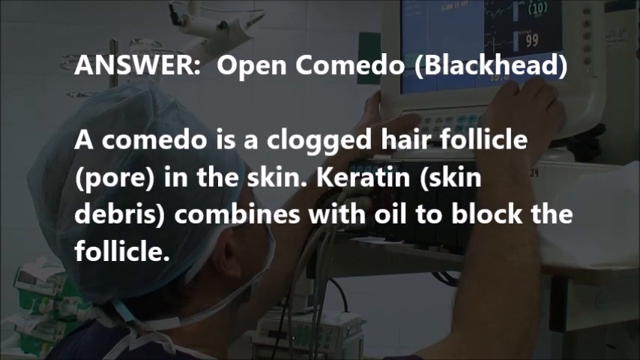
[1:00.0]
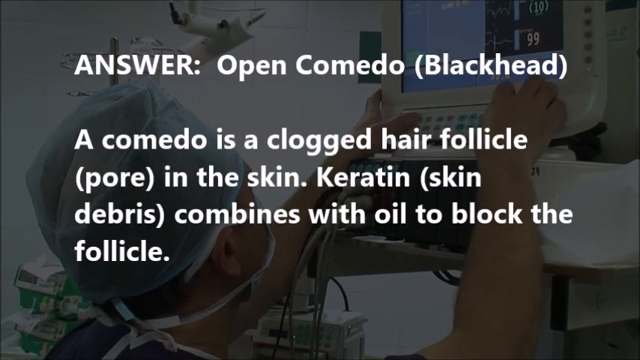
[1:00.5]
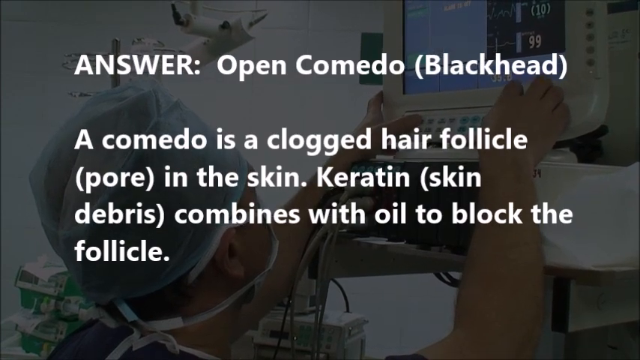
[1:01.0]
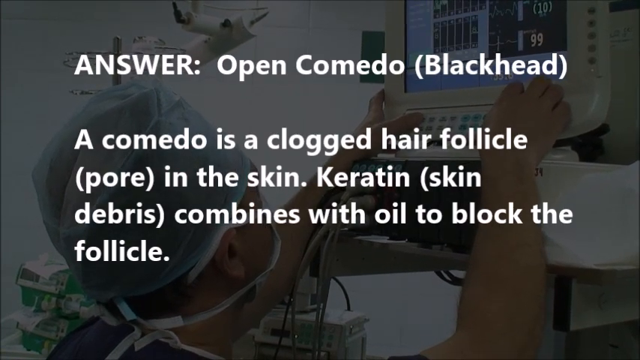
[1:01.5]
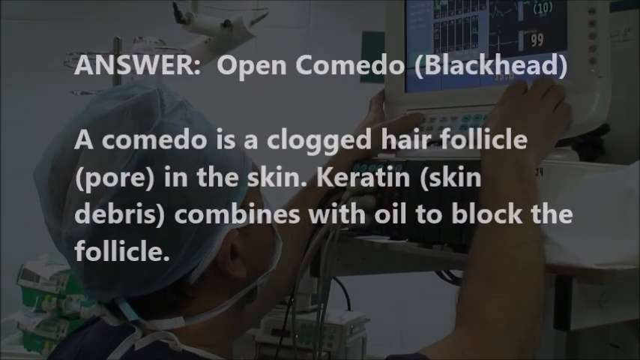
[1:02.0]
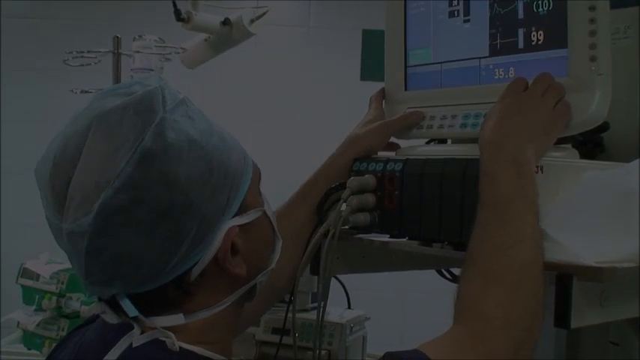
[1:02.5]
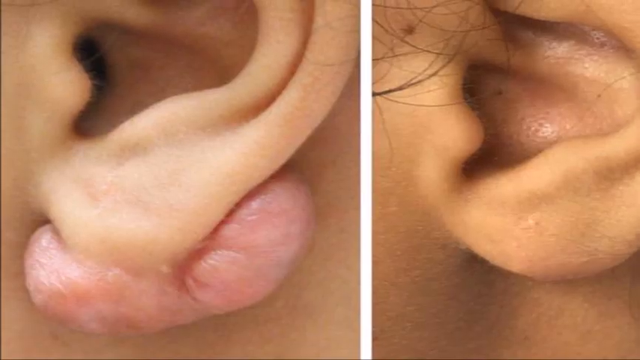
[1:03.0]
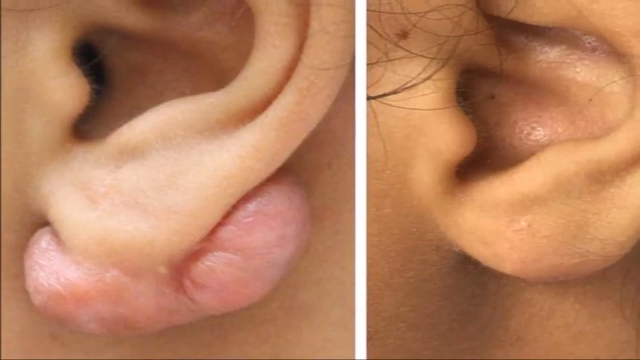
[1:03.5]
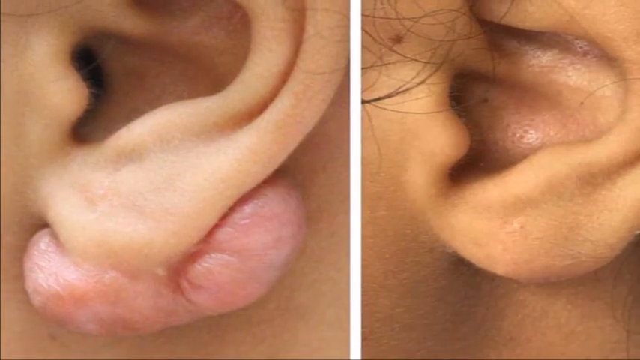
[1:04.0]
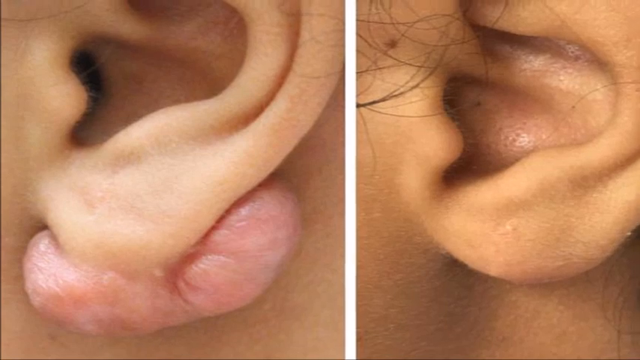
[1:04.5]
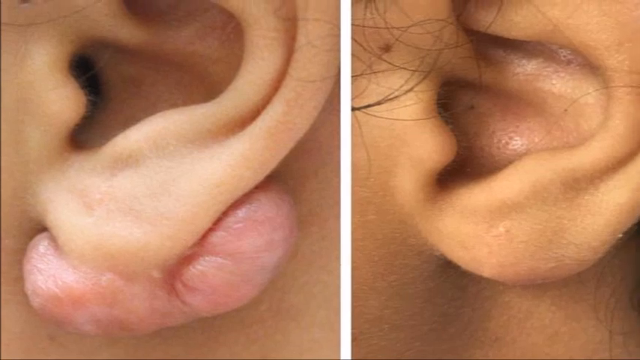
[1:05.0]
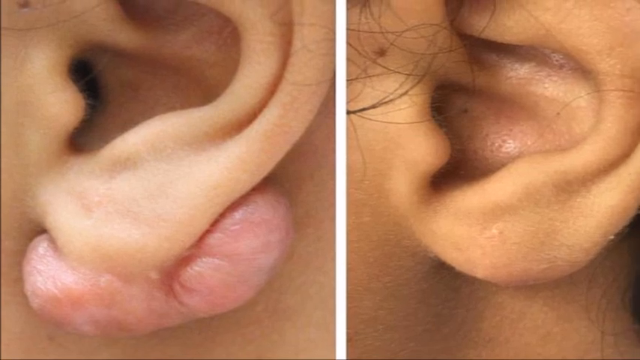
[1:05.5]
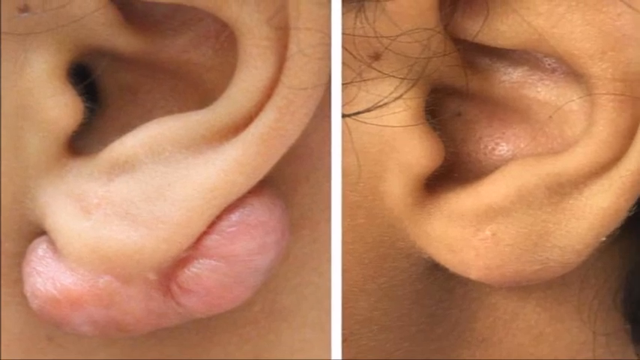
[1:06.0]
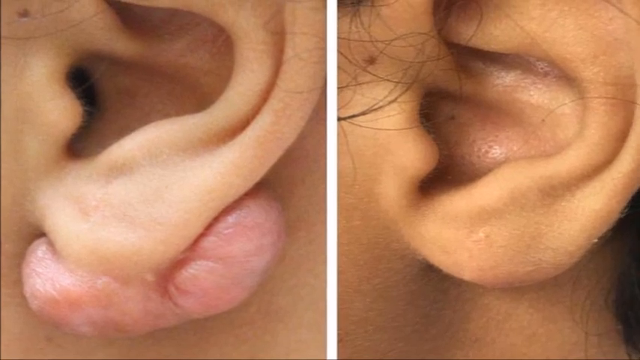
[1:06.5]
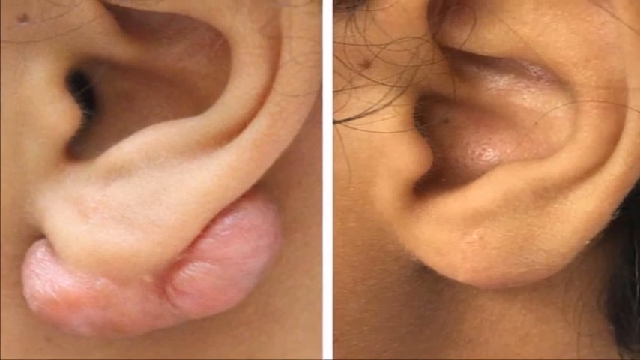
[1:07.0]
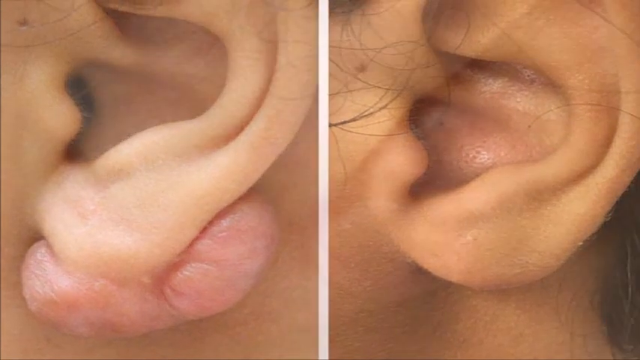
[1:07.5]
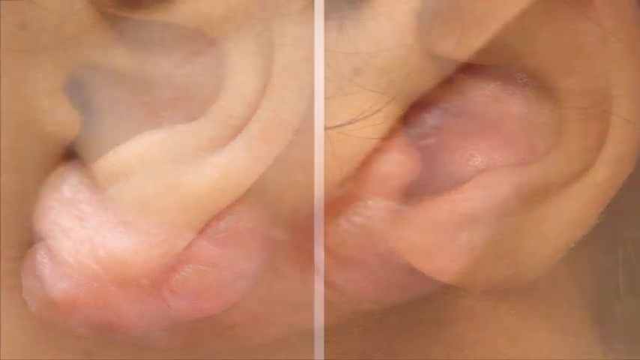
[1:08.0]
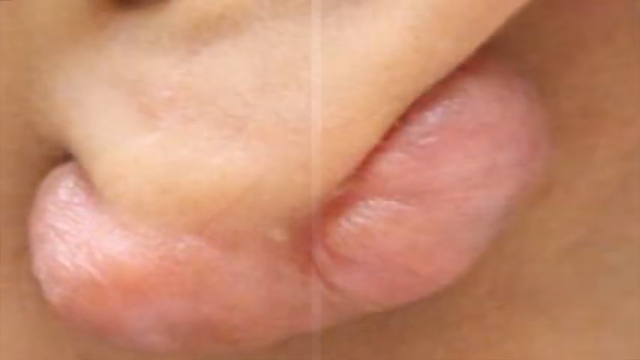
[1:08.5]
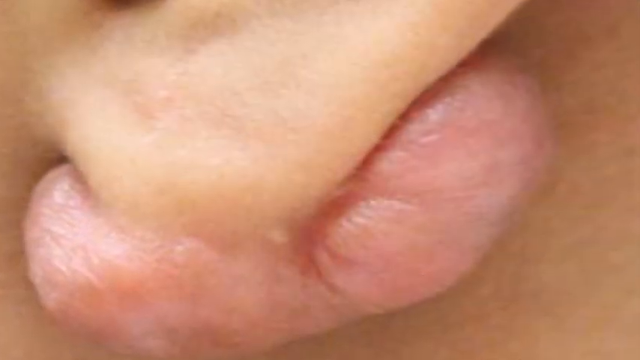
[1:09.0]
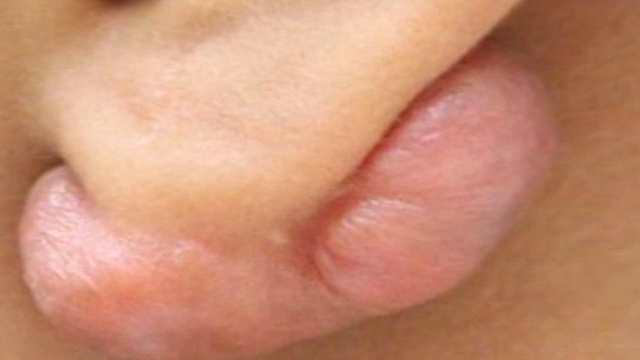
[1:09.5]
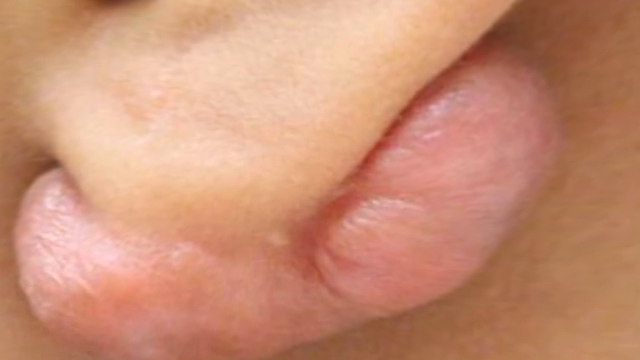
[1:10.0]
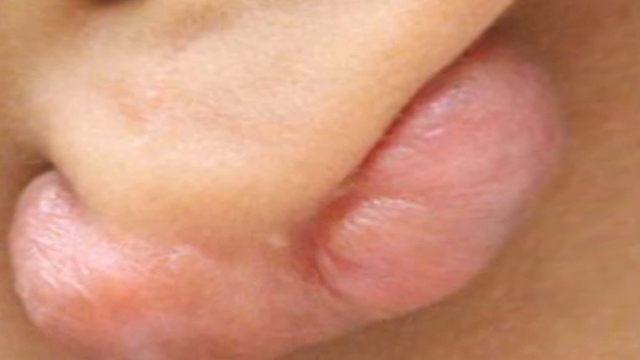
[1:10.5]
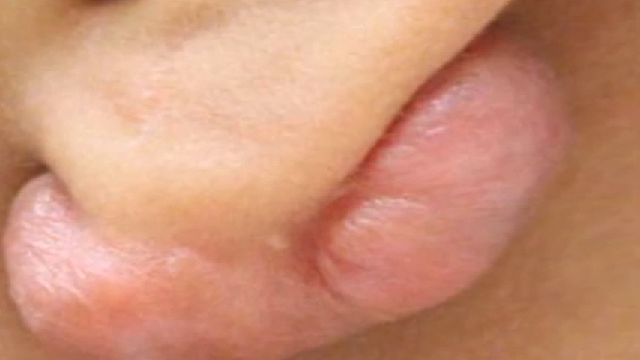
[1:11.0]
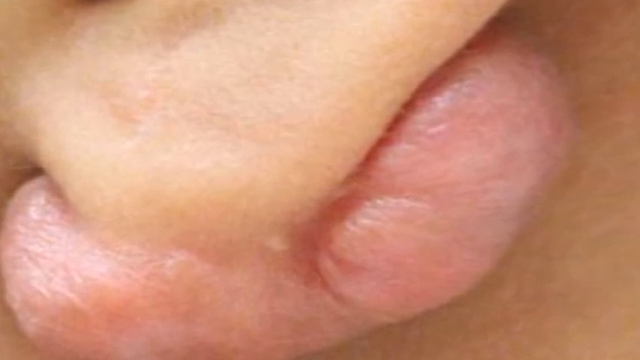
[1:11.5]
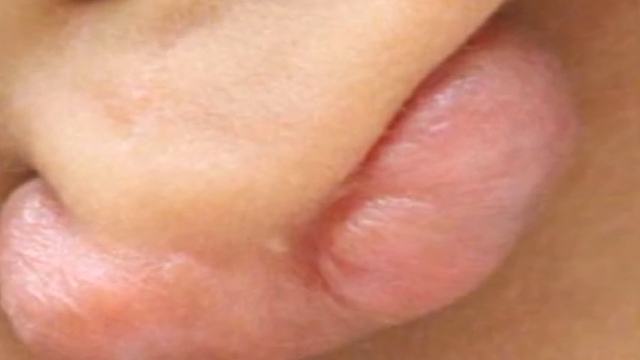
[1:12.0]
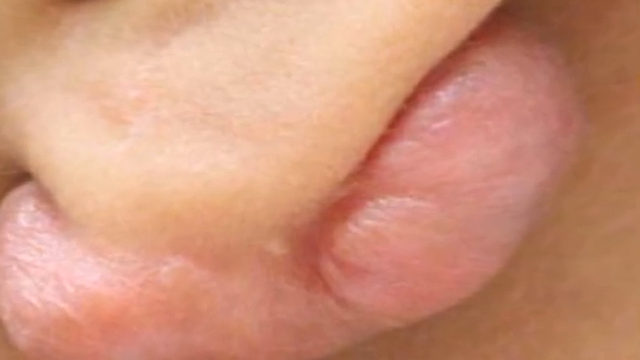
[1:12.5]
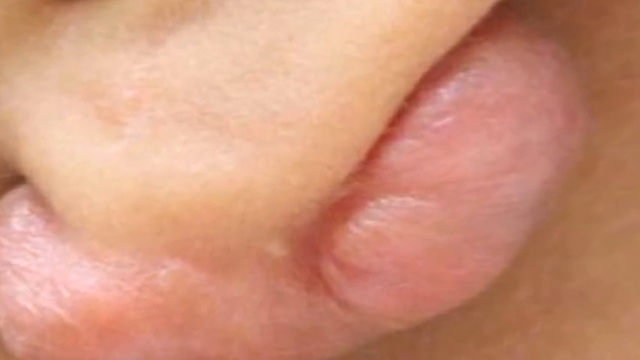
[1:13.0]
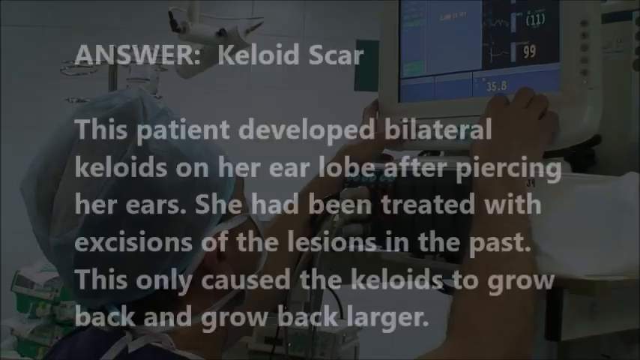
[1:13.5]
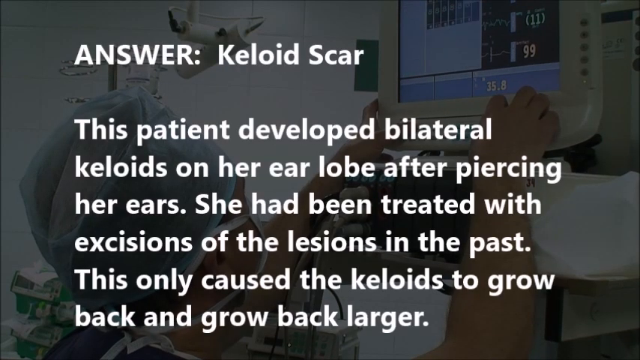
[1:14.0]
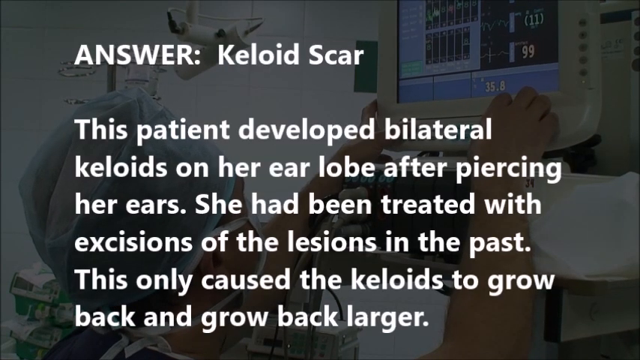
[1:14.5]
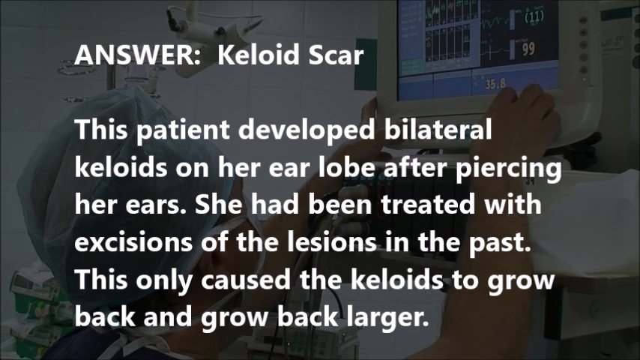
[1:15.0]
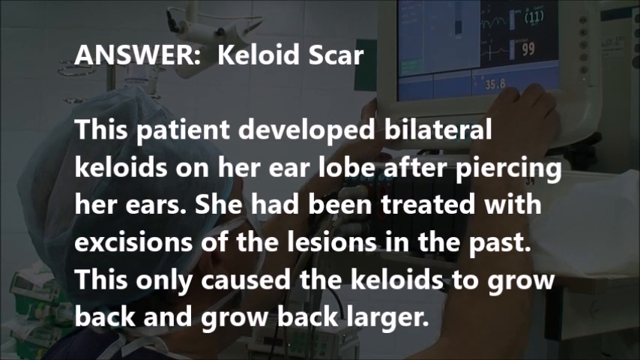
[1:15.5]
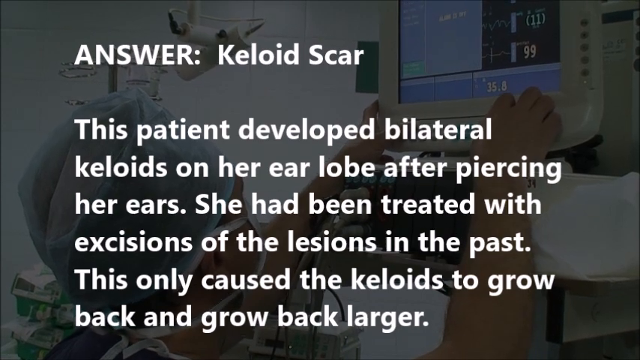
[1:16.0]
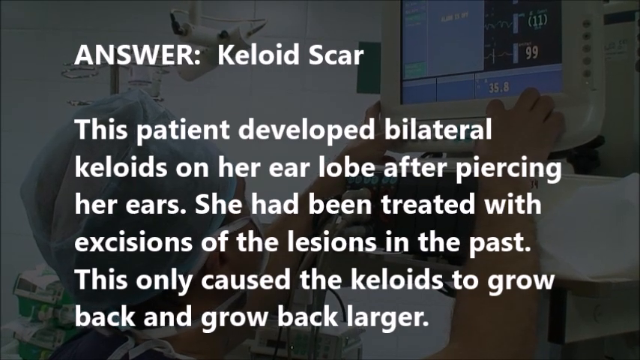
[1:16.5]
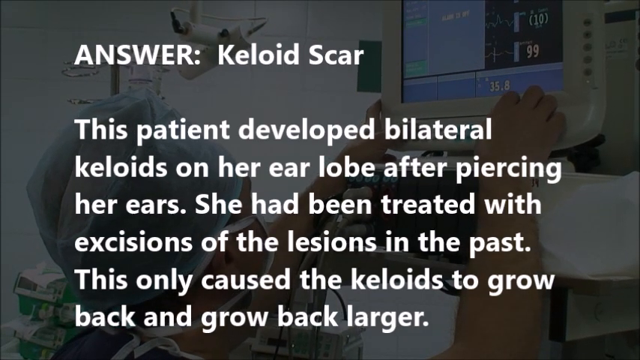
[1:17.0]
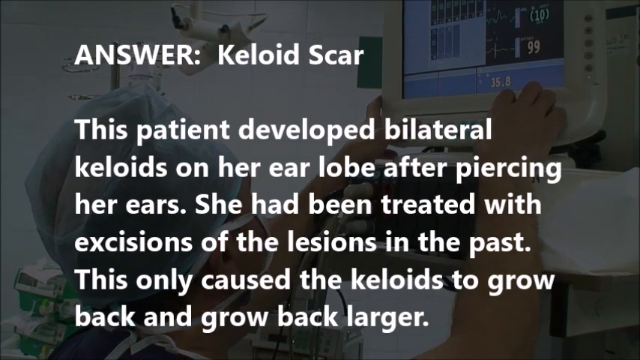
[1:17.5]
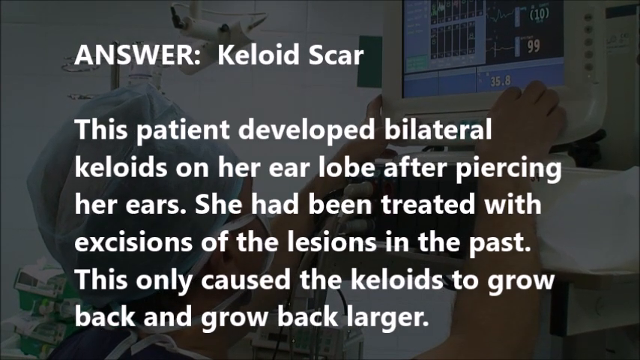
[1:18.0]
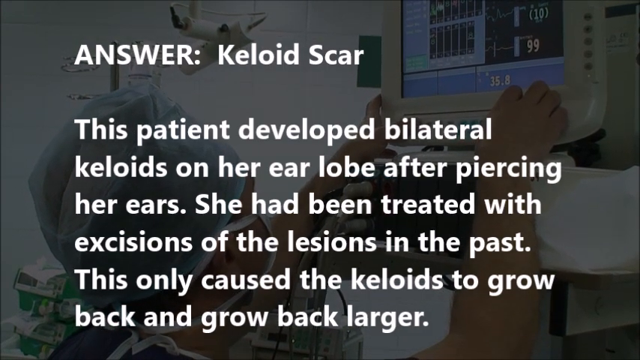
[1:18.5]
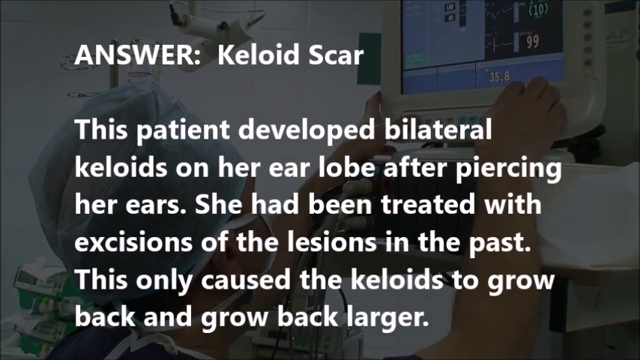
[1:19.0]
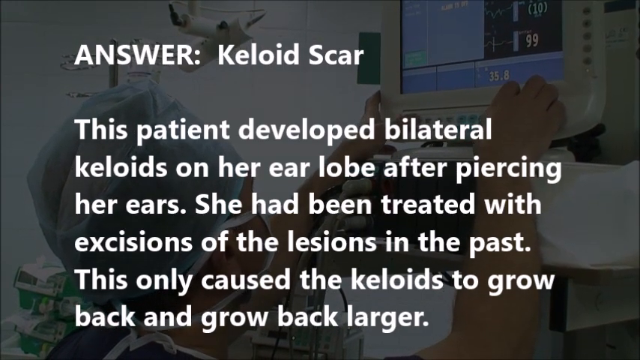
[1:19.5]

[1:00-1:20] After the comedo blackhead segment, a split screen shows close-ups of an ear. On the right is a normal ear; on the left is the same ear with a growth of pink skin attached to the underneath of the bottom of the ear, as wide as the ear. The screen then changes to a close-up of this pink mass, which is slightly creased in the centre where it is attached to the ear base. A description page then reads "answer keloid scar. This patient developed bilateral keloids on her earlobe after piercing her ears. She had been treated with excisions of the lesions in the past. This only caused the keloids to grow back and grow back larger." Behind this information, the surgeon in his surgical mask and hat reaches his arms up to change a monitor that shows black boxes or x-rays and changing numbers on the right-hand side.